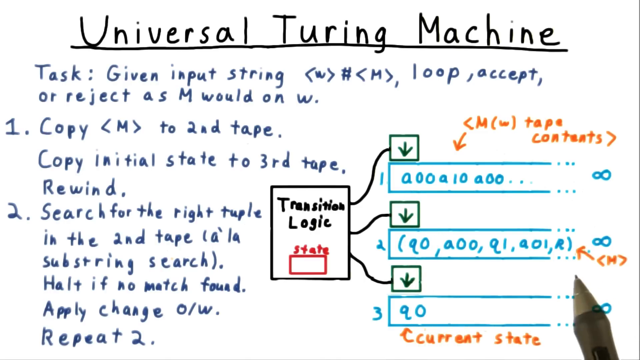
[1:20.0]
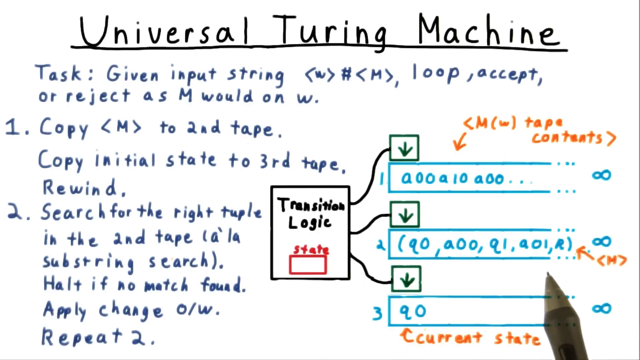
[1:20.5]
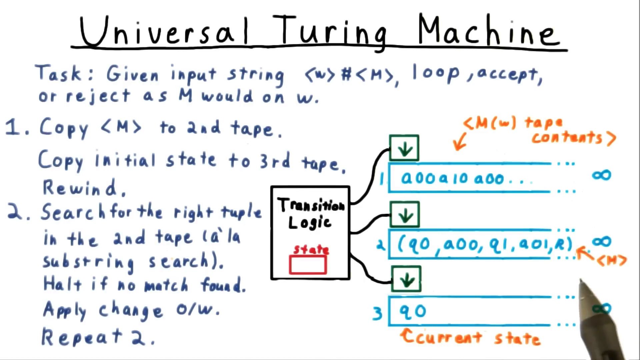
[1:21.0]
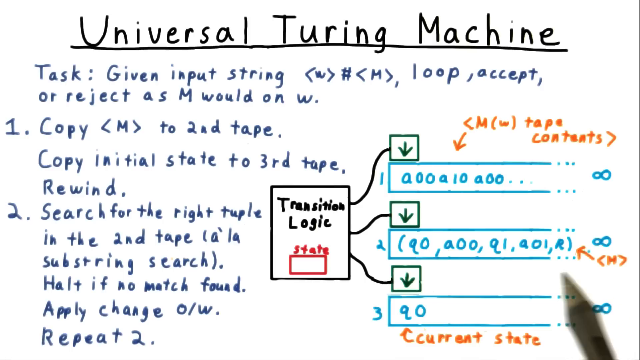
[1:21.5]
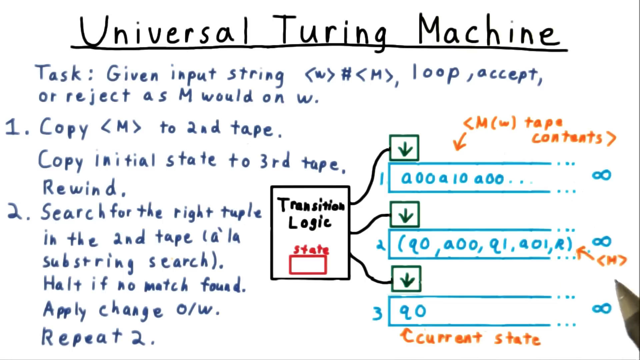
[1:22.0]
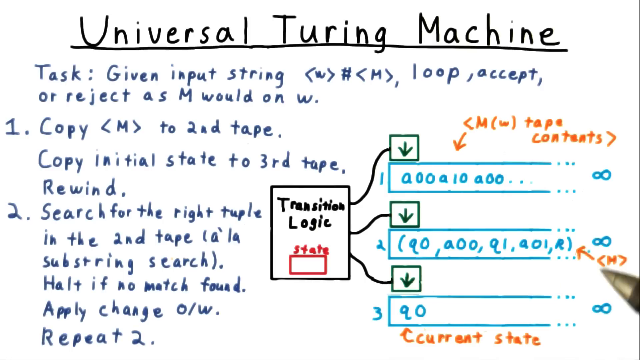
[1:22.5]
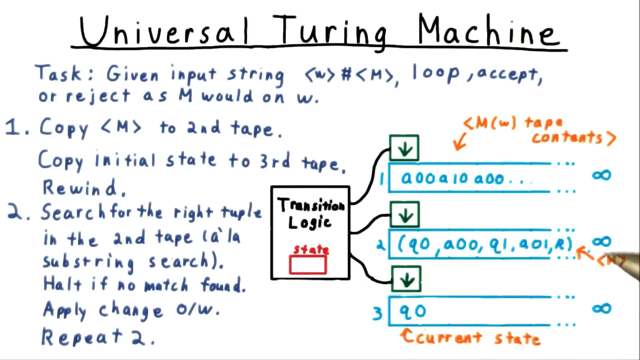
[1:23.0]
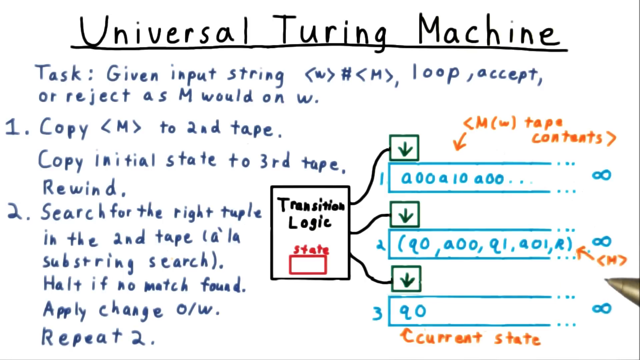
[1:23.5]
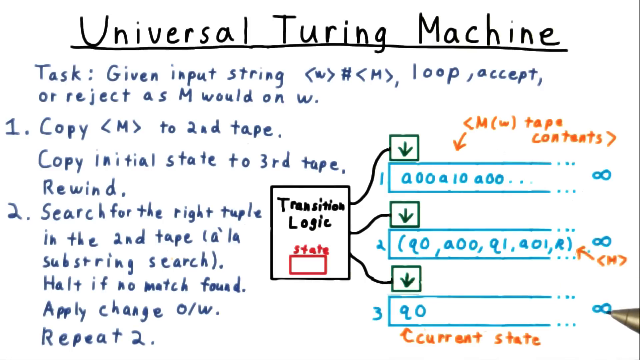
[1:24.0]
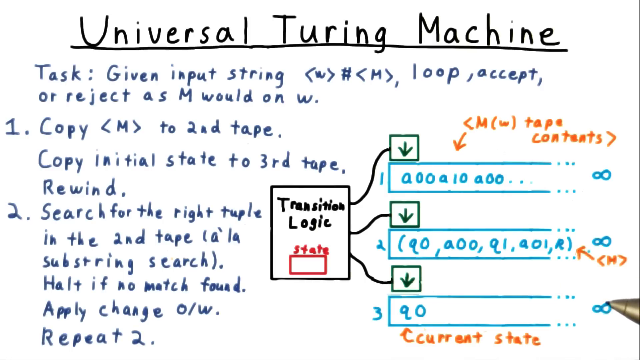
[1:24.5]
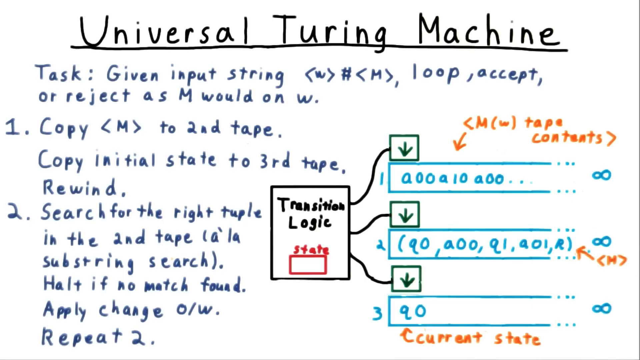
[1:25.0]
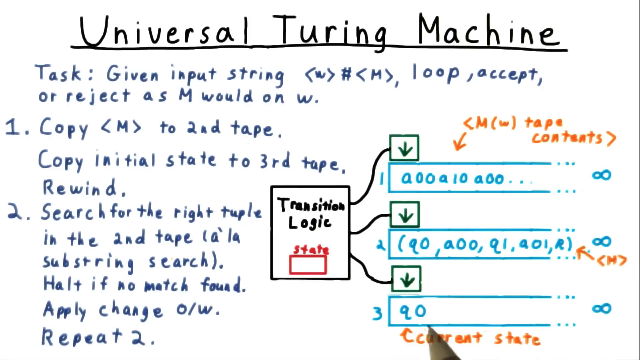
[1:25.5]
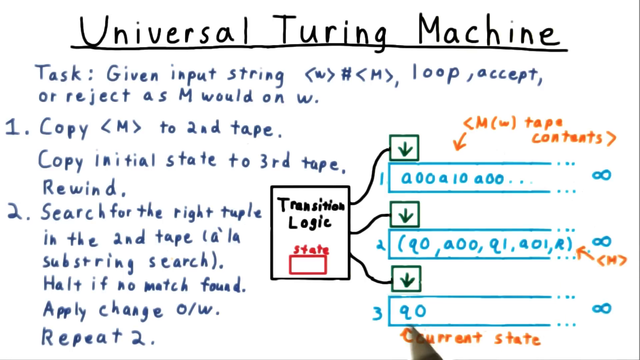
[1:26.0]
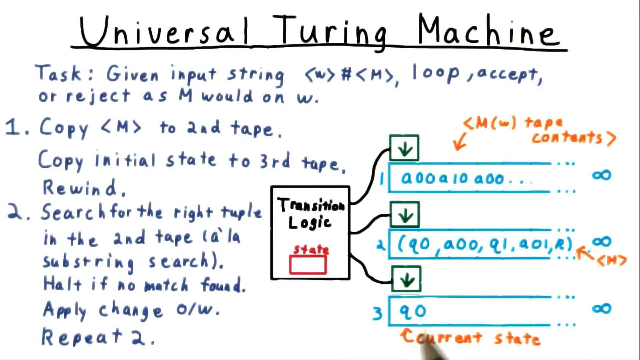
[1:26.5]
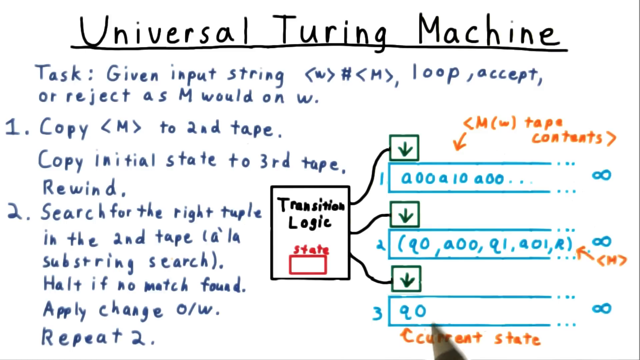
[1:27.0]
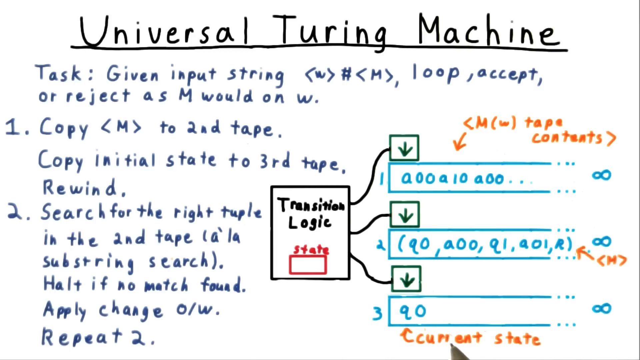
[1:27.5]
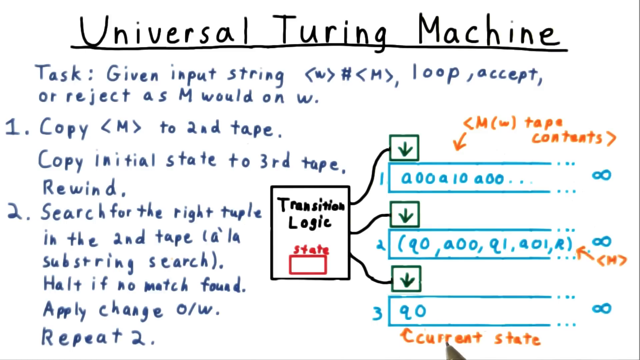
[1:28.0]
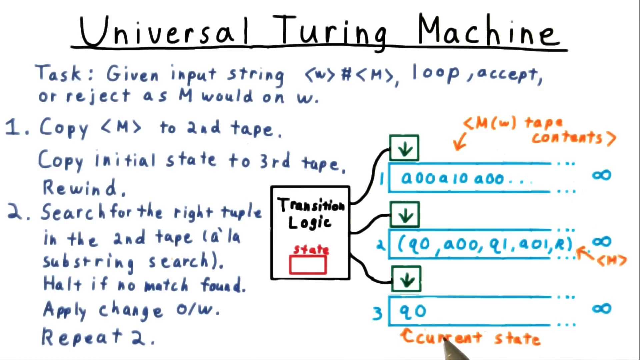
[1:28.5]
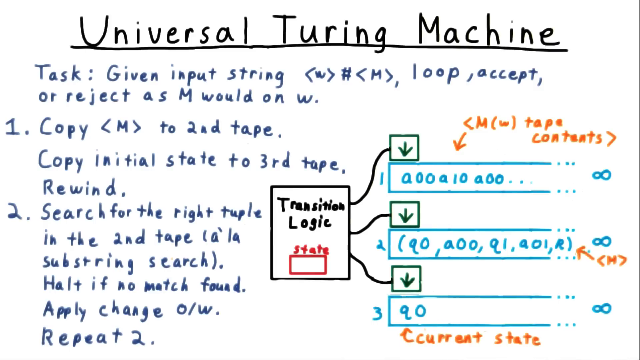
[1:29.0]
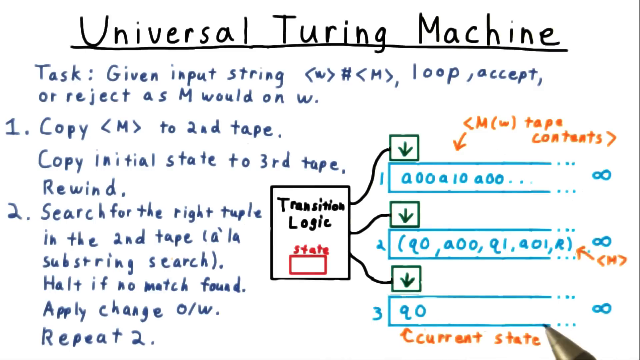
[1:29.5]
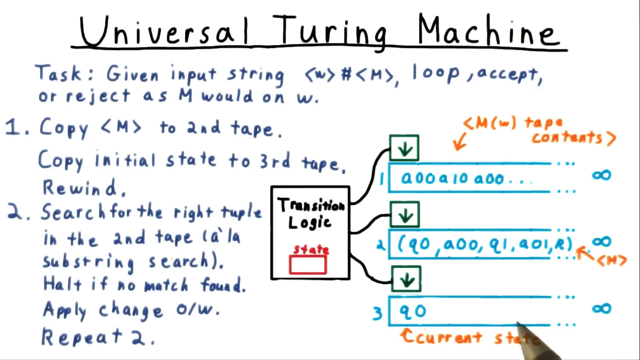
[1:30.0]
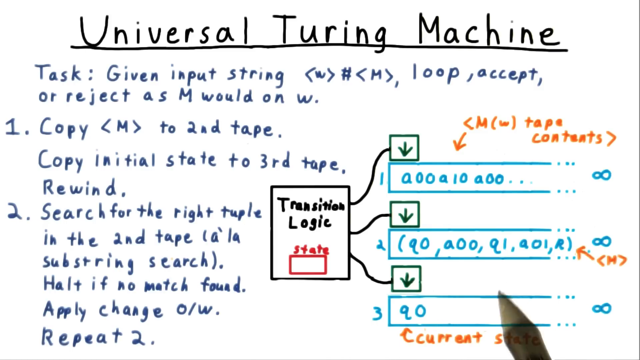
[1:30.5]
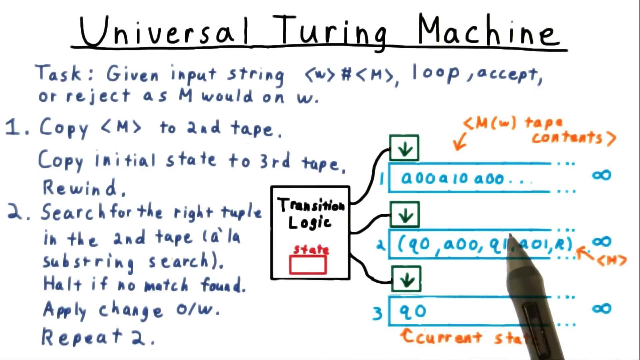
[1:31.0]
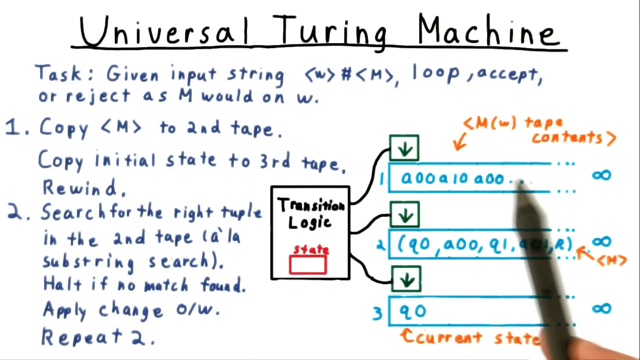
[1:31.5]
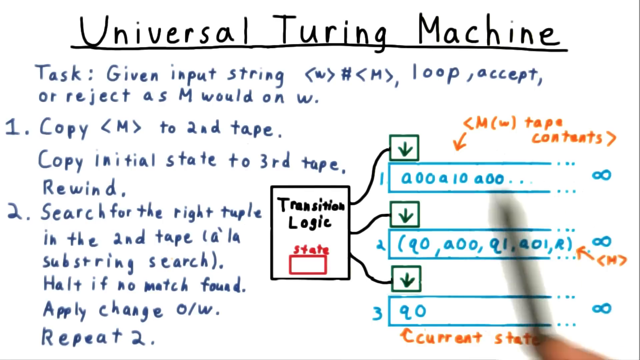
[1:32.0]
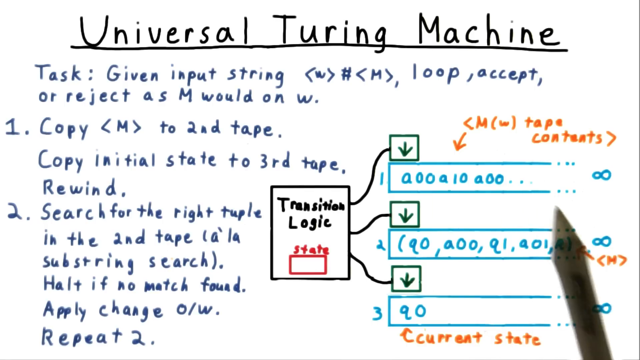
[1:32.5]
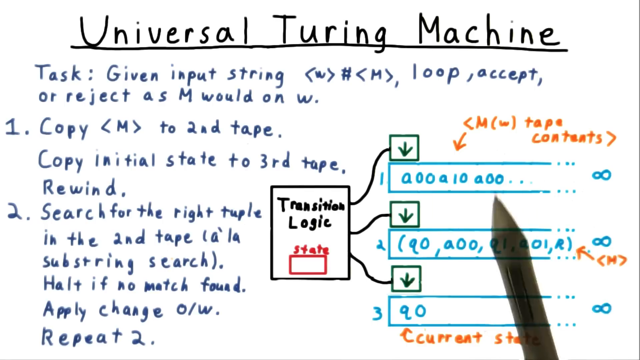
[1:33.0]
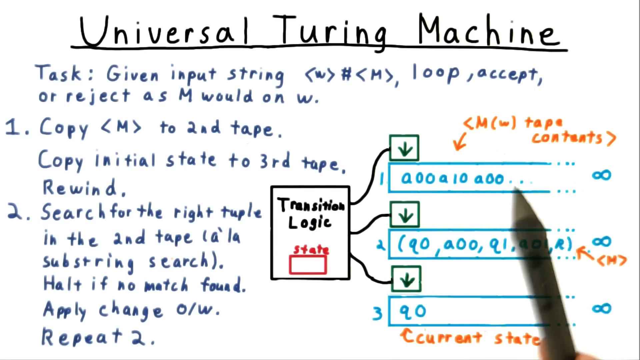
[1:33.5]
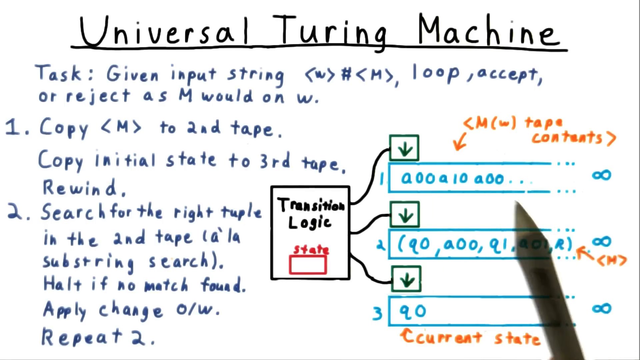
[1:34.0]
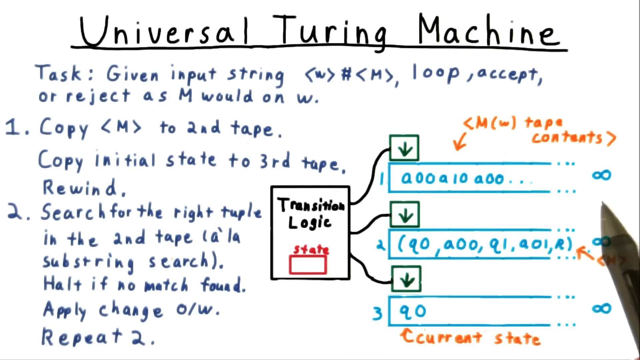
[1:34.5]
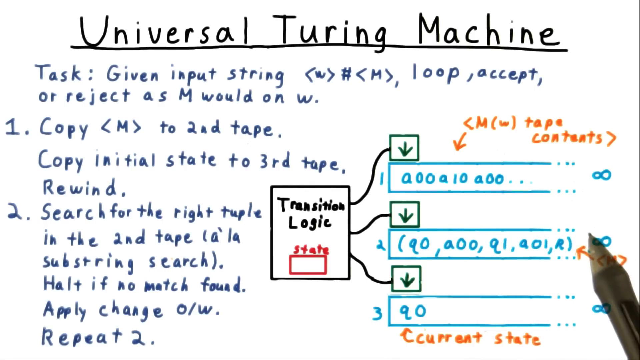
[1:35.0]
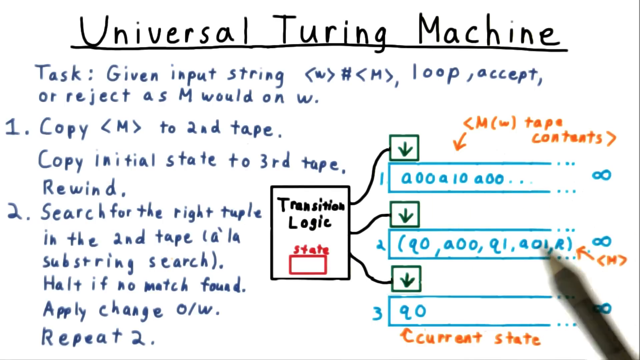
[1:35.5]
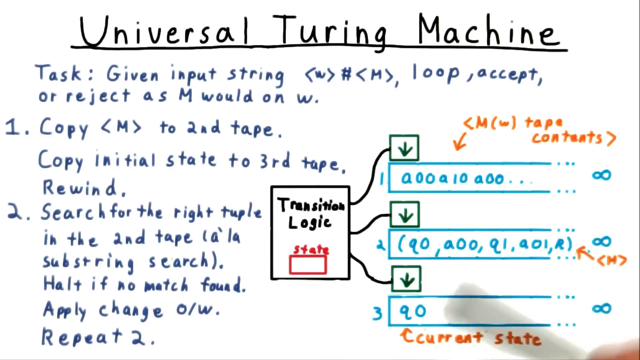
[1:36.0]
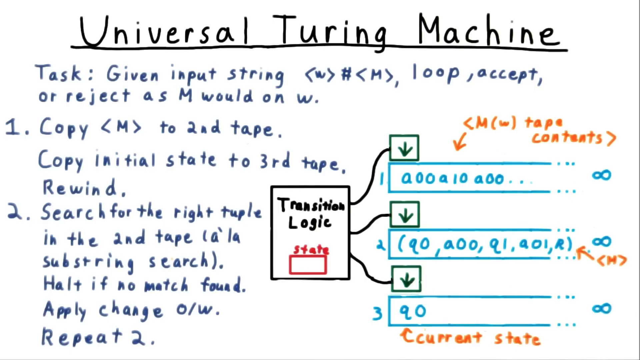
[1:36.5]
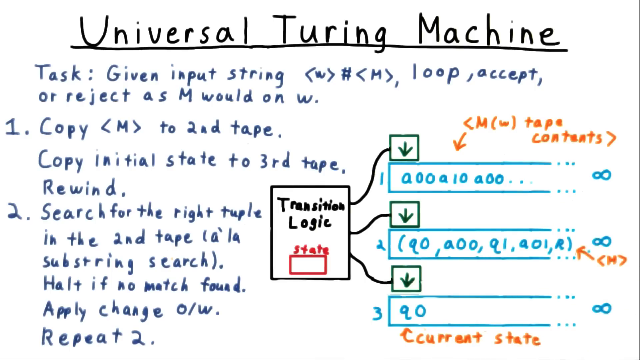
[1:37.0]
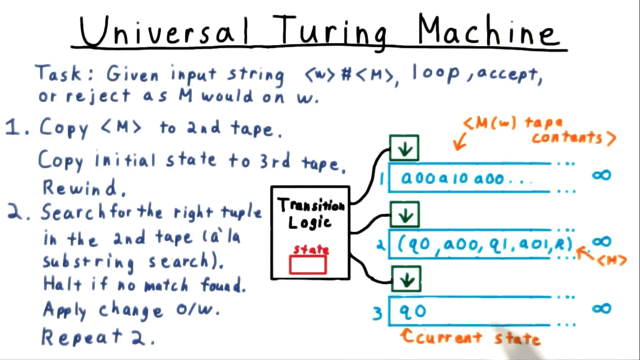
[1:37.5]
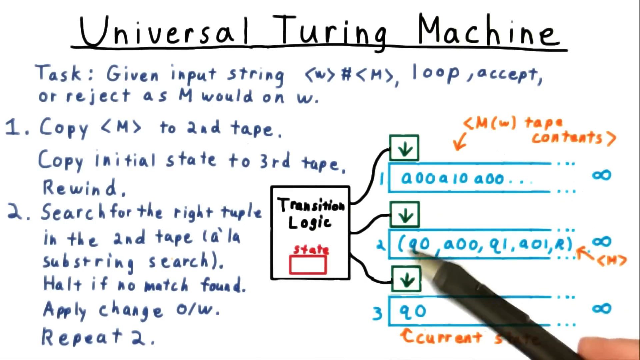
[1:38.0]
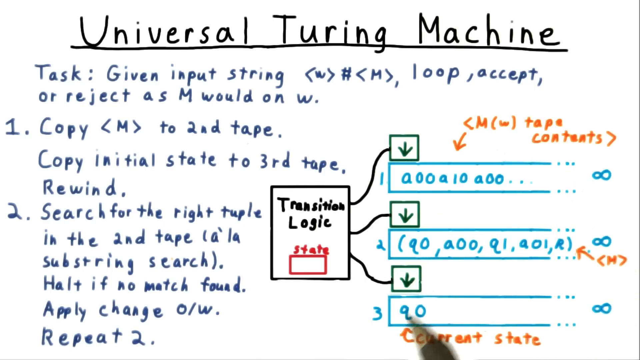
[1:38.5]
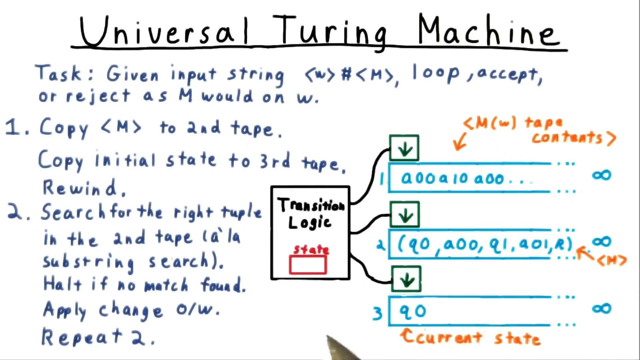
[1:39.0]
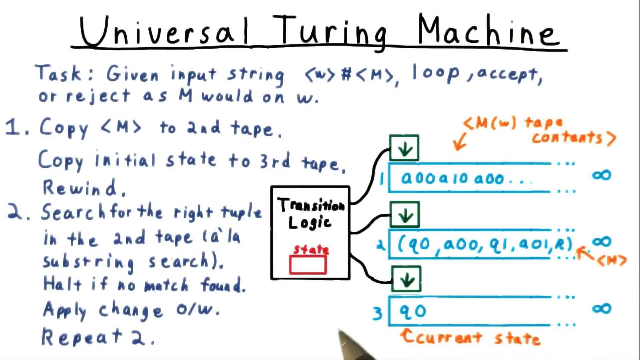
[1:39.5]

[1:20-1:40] The digital whiteboard has a title in black text that says "Universal Turing Machine." On the left side of the screen is a text explanation, and on the right side is a flow diagram for the transition logic state. A stylus pen held by a hand that is not in view interacts with the screen, pointing at it without directly touching it. It hovers around the diagram section, moving in circles and pointing to various parts of the diagram. The diagram is split into a transition logic box that flows into three separate boxes joined together by downward arrows. The stylus appears to point at the top box, then move down to the second box, and finally point at the third box. The boxes have various number/text strings inside them, and there is an infinity sign at the end.